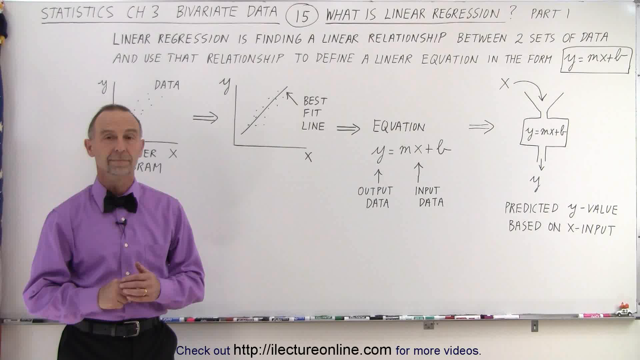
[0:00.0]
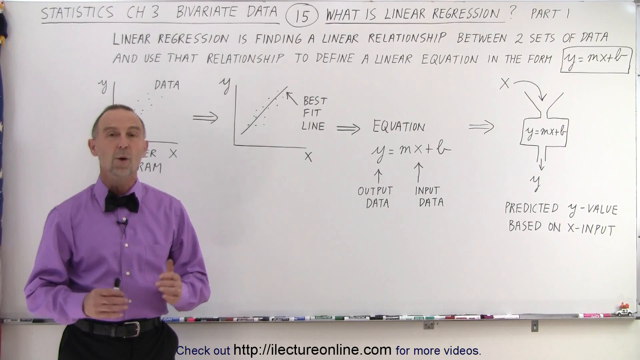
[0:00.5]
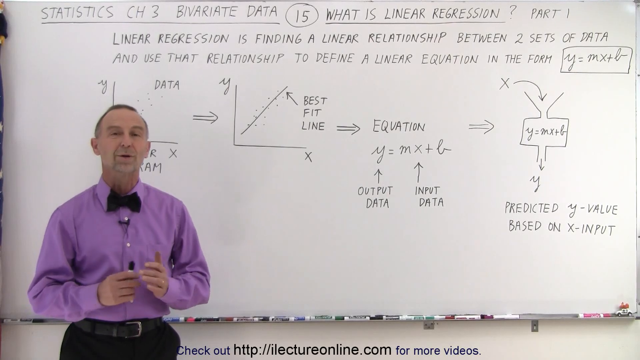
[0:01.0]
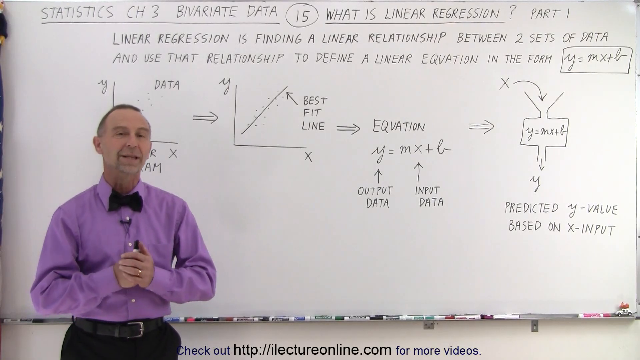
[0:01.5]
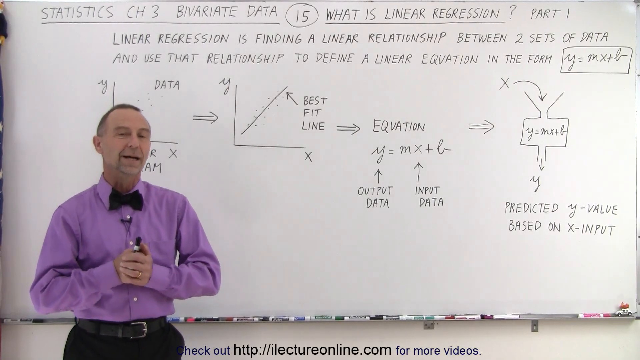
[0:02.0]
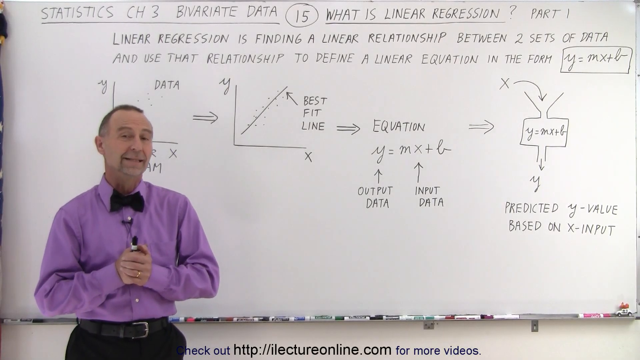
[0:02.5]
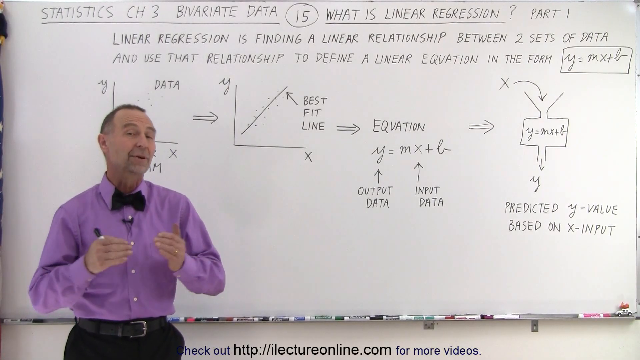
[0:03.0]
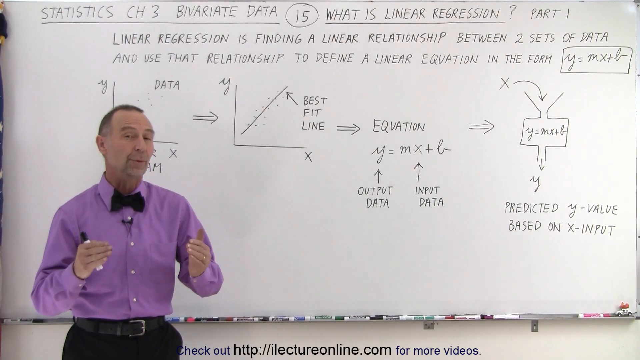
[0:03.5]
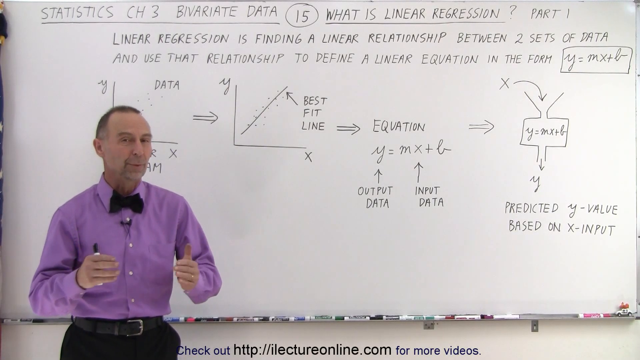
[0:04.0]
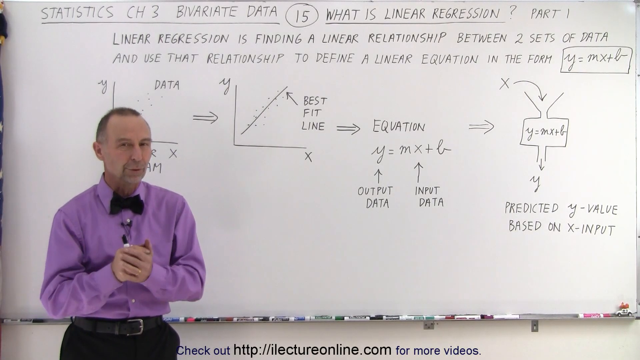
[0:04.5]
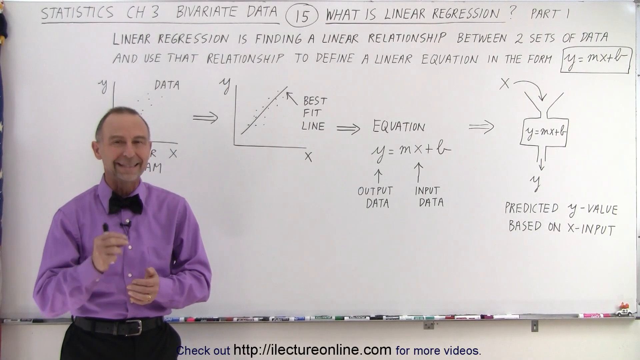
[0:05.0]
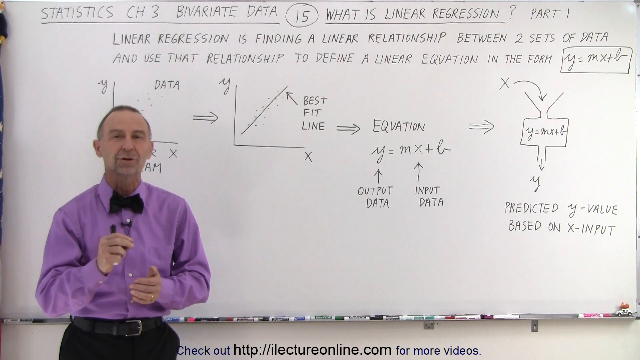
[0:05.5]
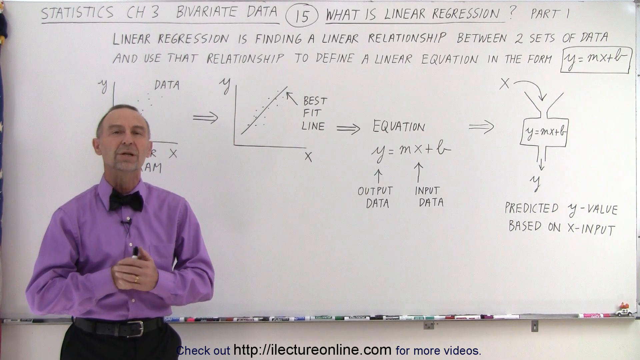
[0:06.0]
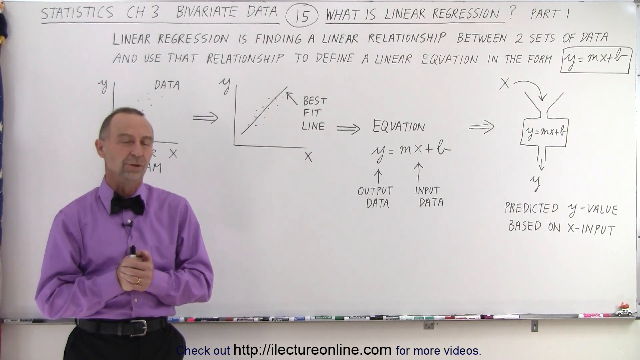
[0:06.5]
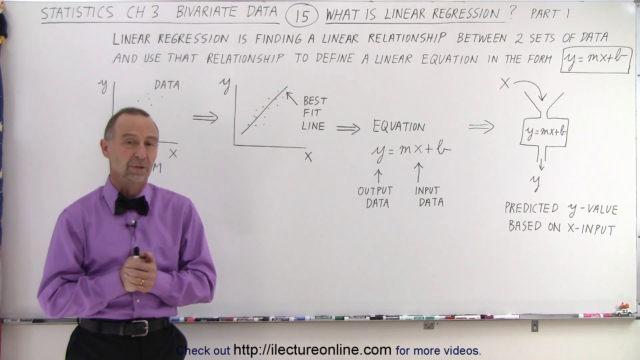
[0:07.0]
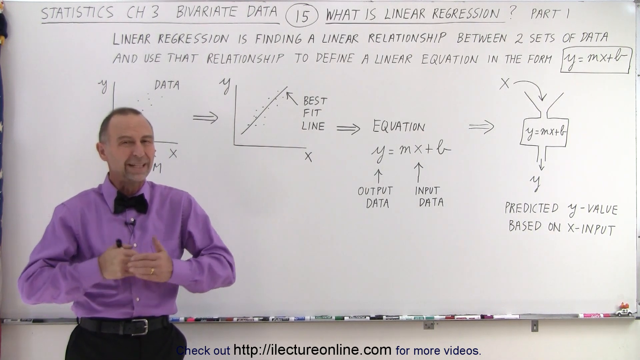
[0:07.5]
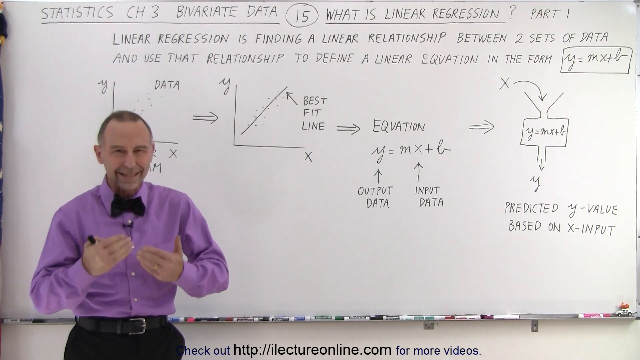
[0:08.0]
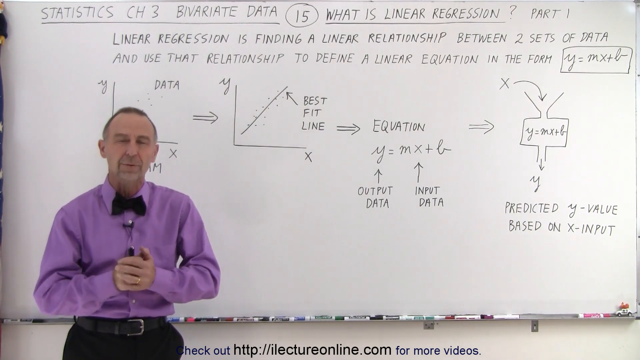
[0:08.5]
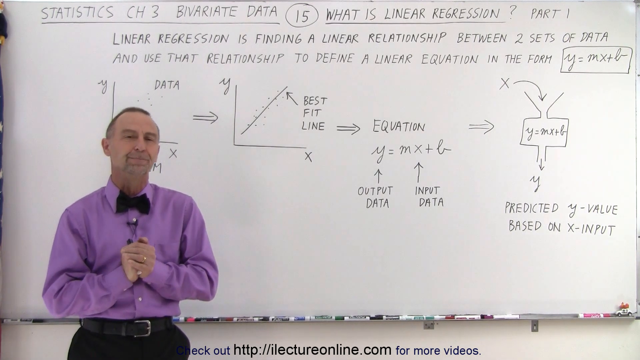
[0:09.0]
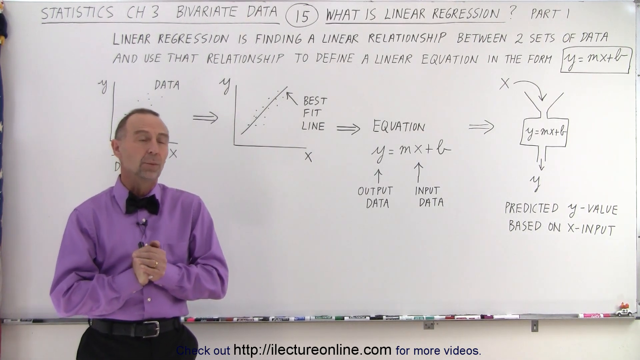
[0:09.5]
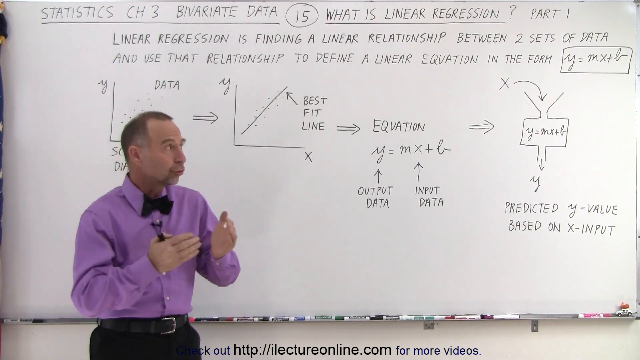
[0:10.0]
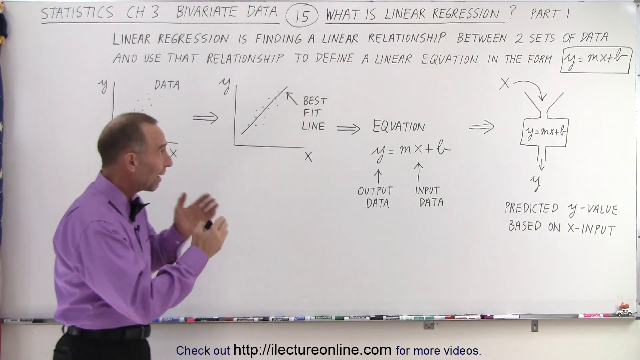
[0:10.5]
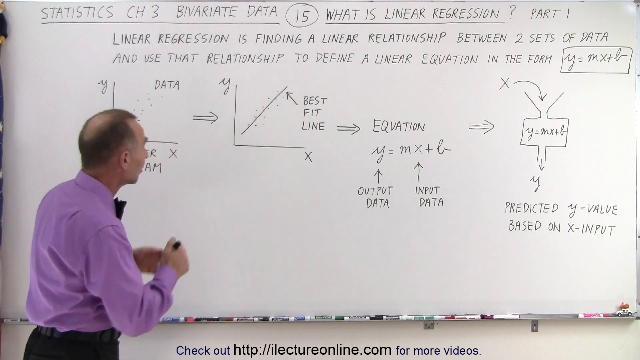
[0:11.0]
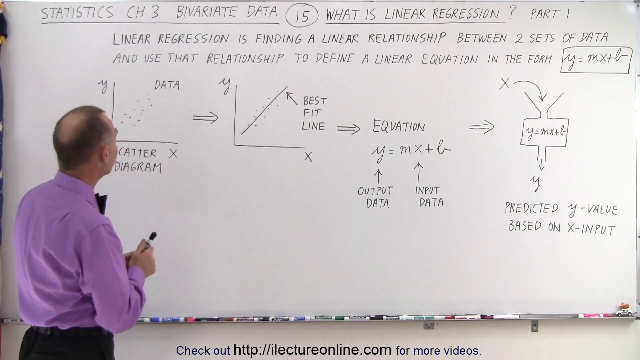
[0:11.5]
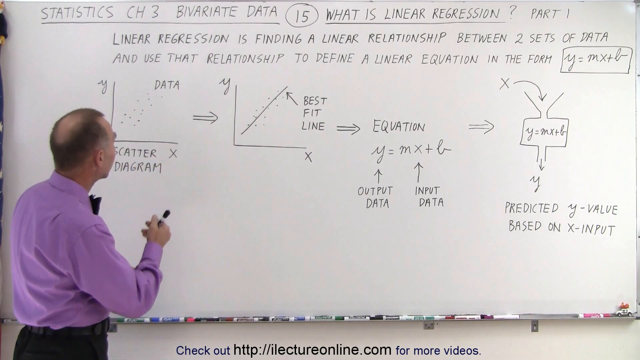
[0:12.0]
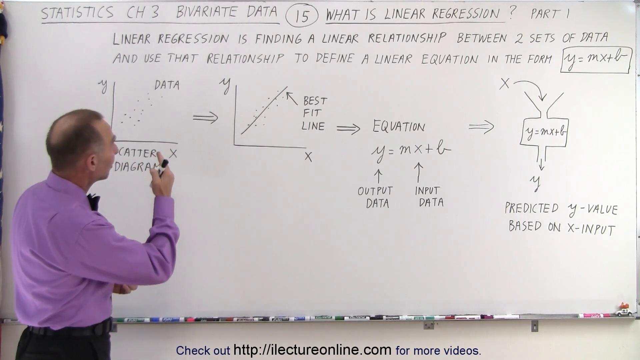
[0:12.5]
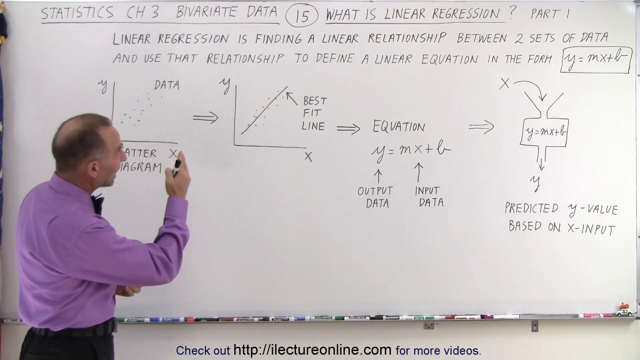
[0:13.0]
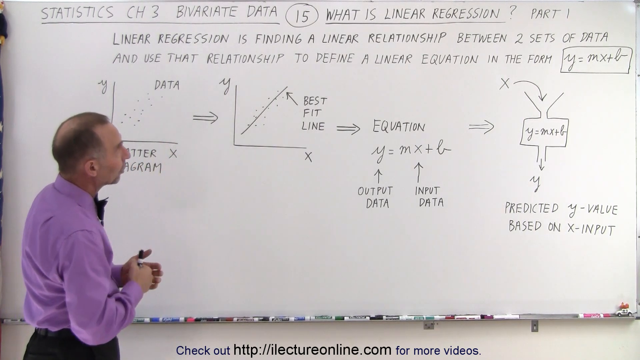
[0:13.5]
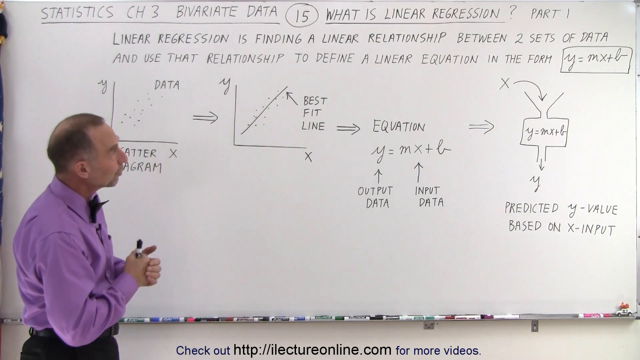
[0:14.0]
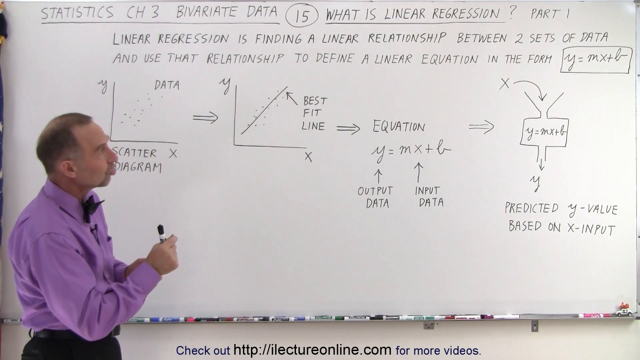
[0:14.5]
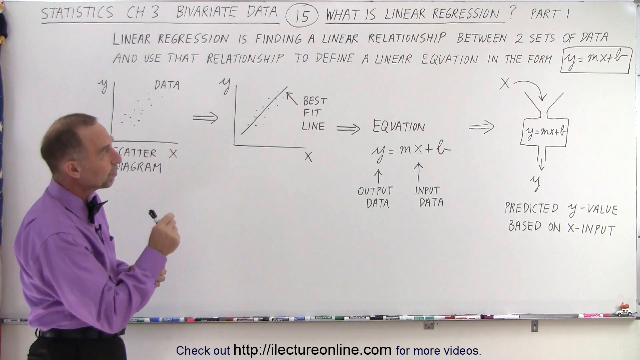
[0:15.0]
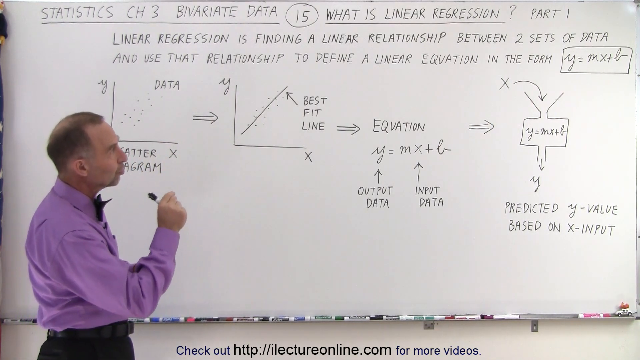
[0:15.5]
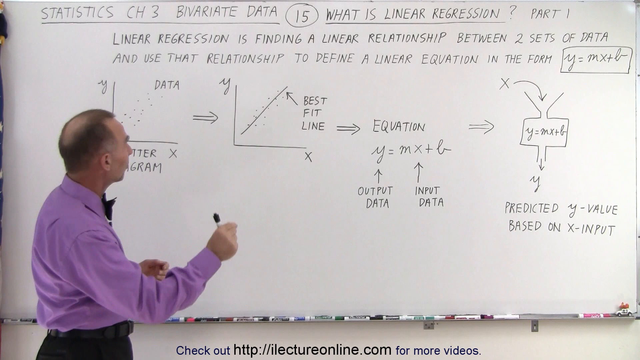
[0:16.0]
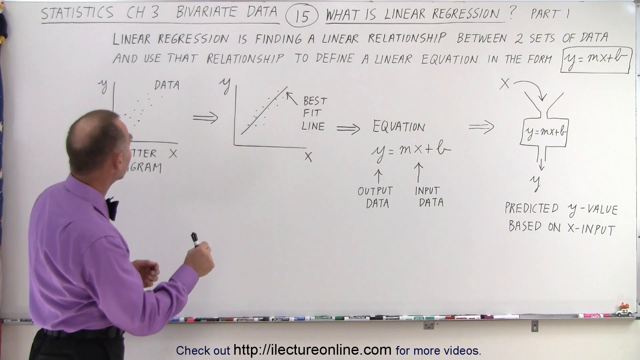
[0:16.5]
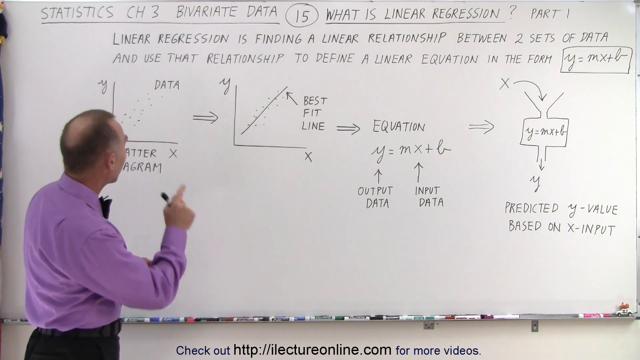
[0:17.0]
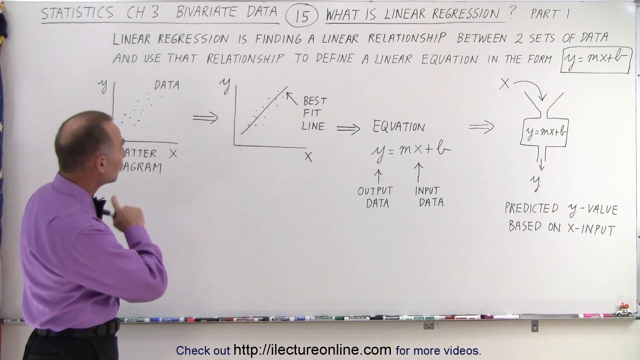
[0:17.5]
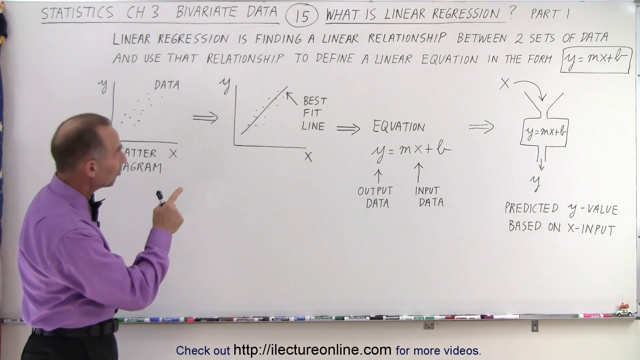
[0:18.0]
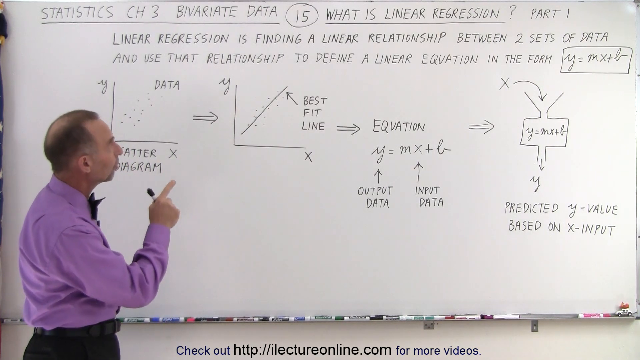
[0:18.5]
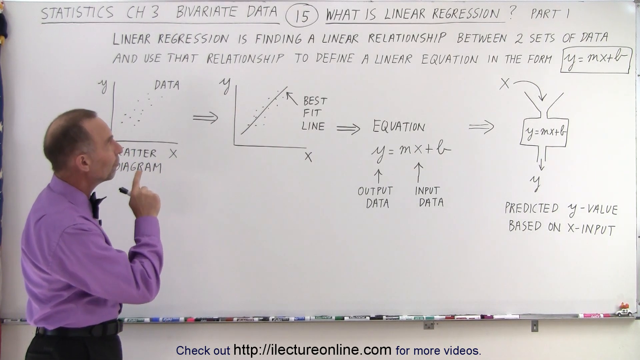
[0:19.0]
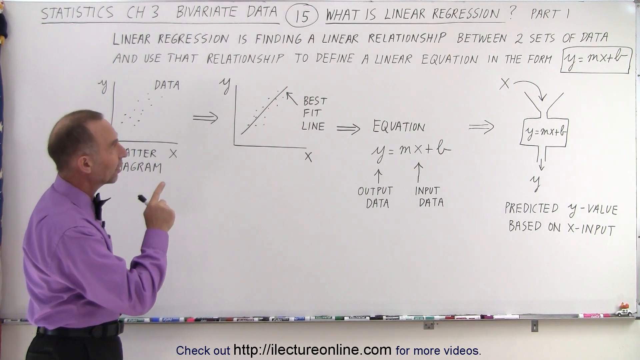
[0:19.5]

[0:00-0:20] Only one person appears: a man who seems to be a lecturer, possibly a professor, and he is lecturing. Behind him is a whiteboard on which he has written the information about the topic he is lecturing on, with headings showing the subject is linear regression along with an explanation of what it is. He has made drawings and arrows on the board to illustrate the material. The man is a bit older, but not too old, and wears a long-sleeved purple T-shirt with a bow tie; below the bow tie is a mic that he speaks into. He holds a black marker, which he uses to write on the whiteboard behind him.